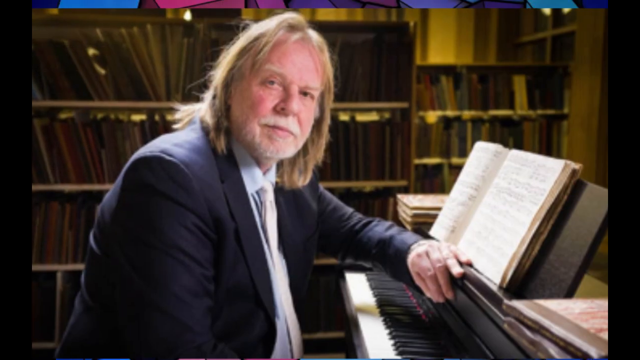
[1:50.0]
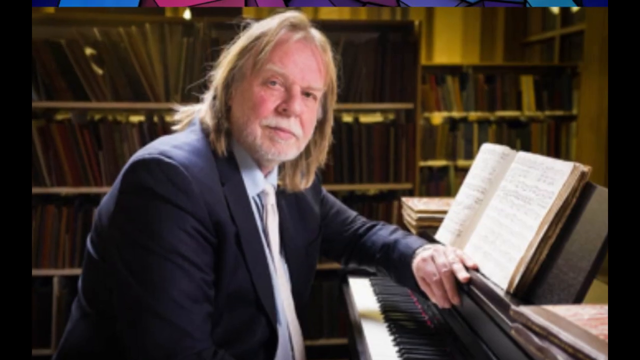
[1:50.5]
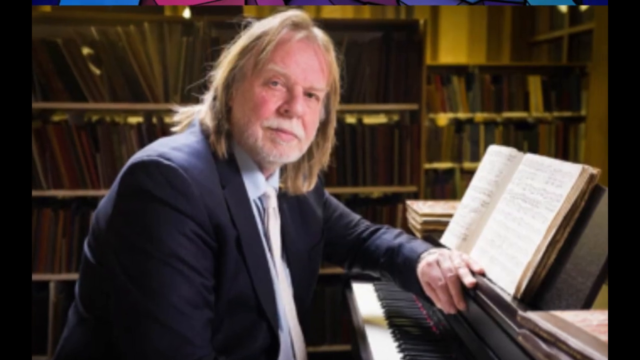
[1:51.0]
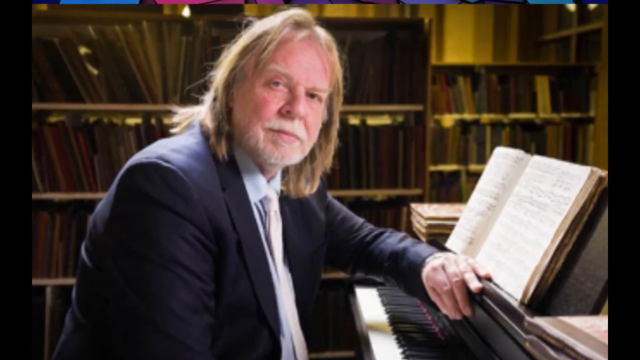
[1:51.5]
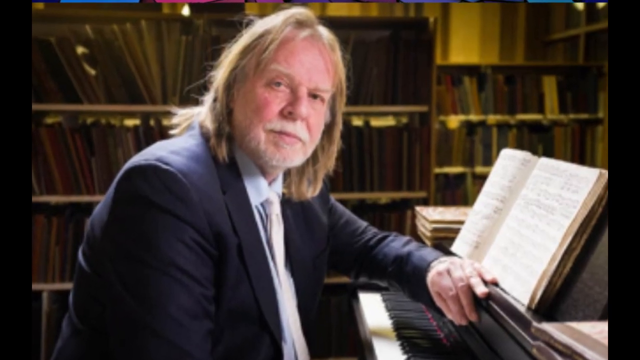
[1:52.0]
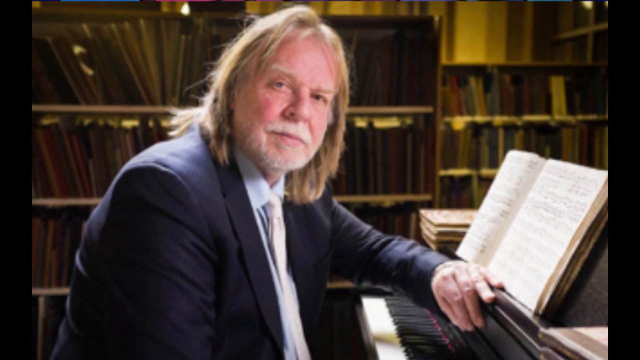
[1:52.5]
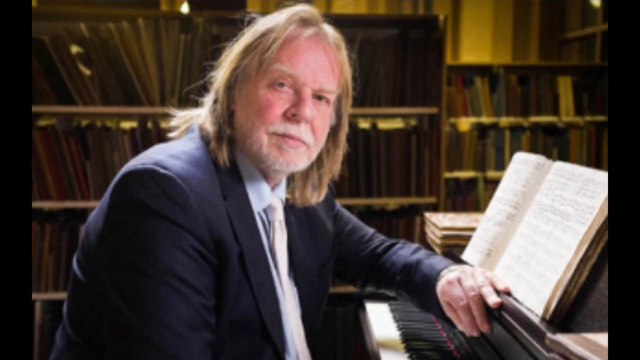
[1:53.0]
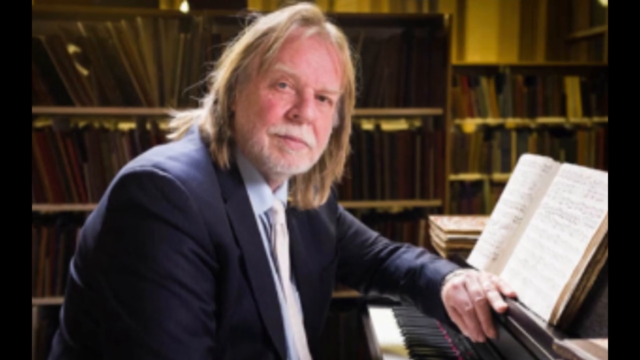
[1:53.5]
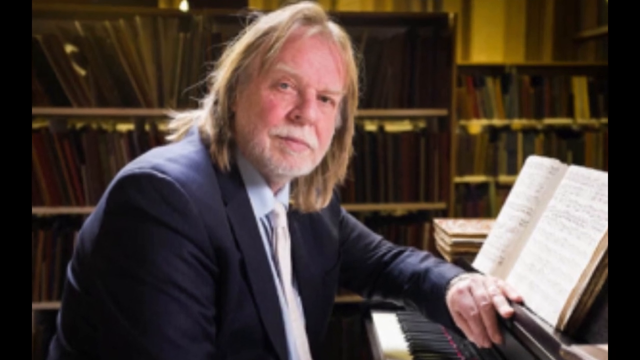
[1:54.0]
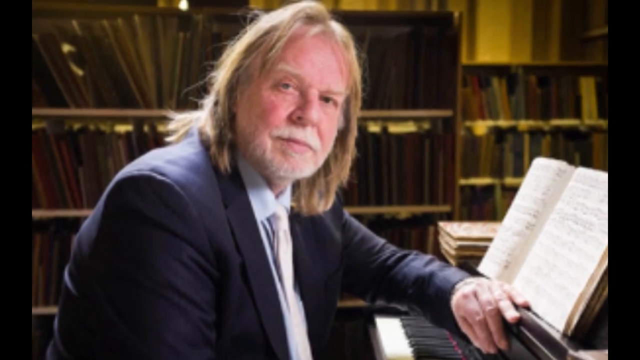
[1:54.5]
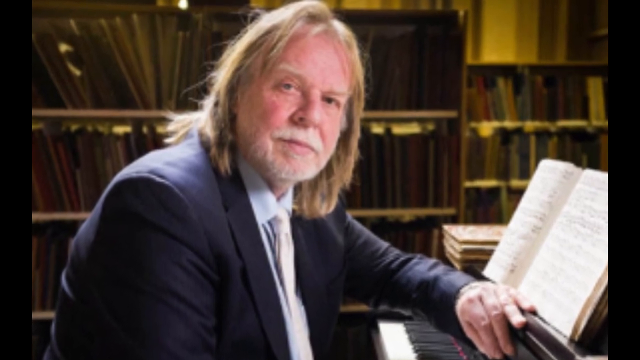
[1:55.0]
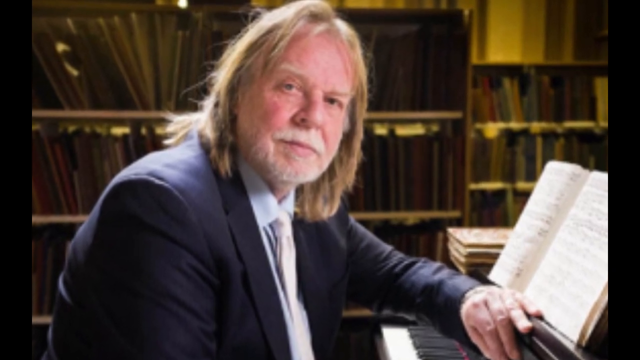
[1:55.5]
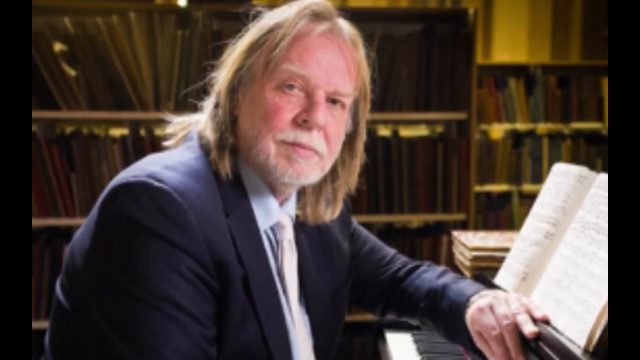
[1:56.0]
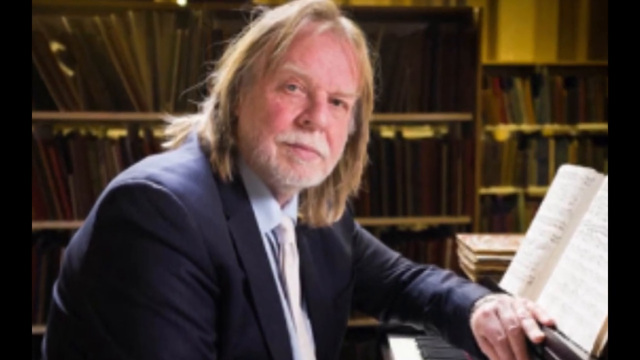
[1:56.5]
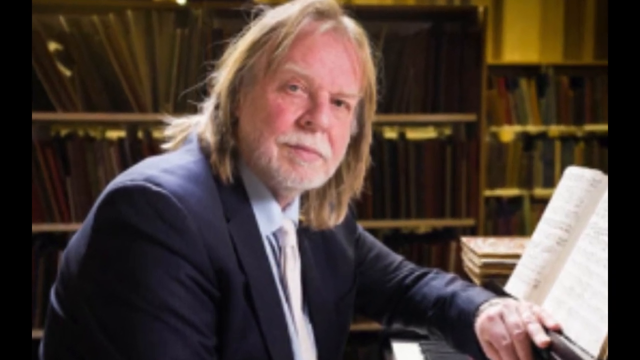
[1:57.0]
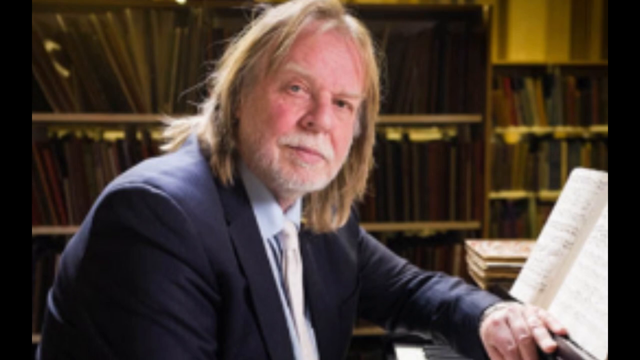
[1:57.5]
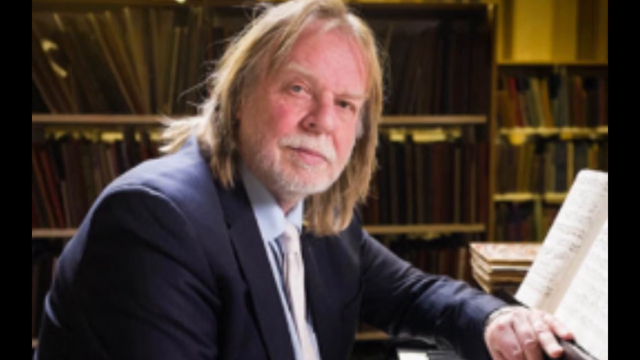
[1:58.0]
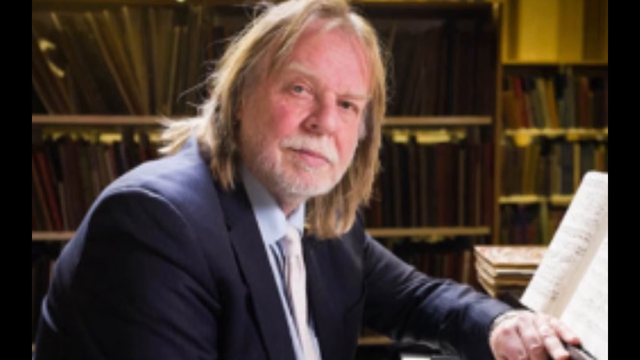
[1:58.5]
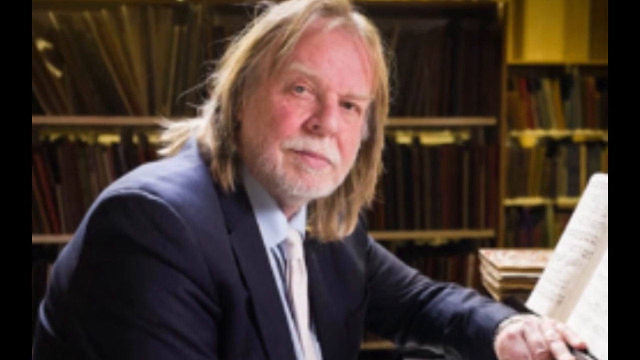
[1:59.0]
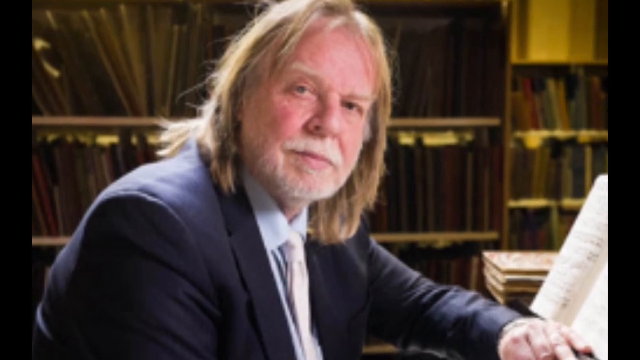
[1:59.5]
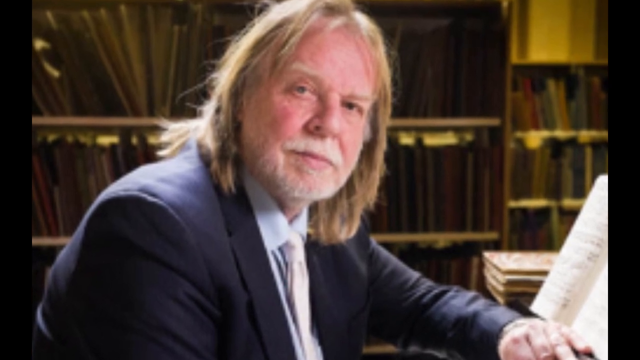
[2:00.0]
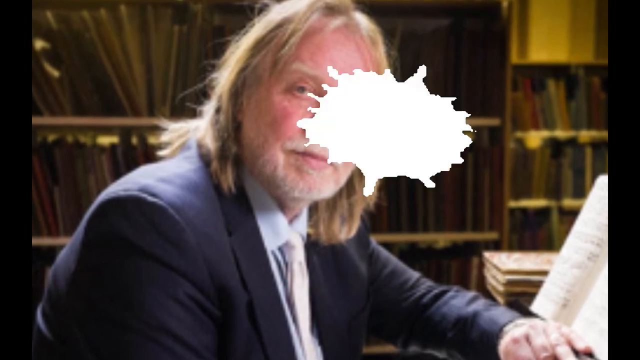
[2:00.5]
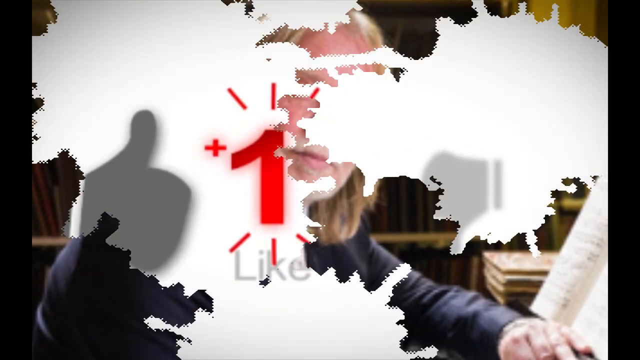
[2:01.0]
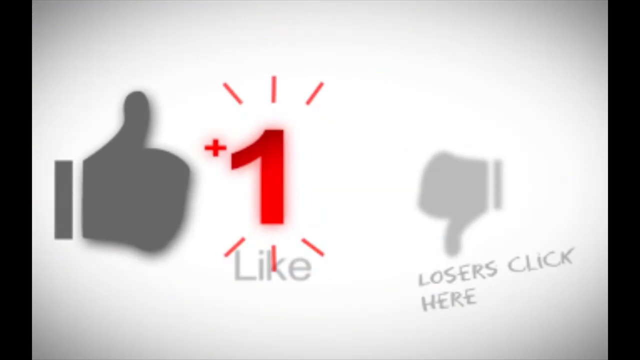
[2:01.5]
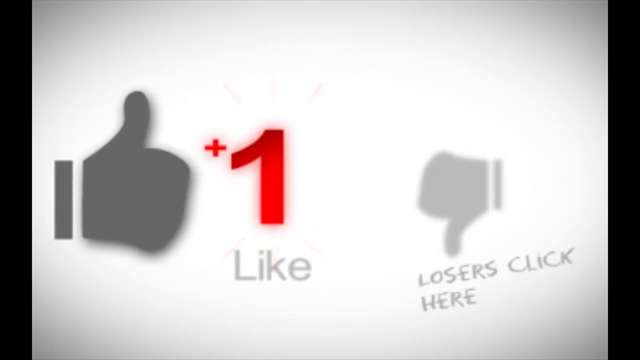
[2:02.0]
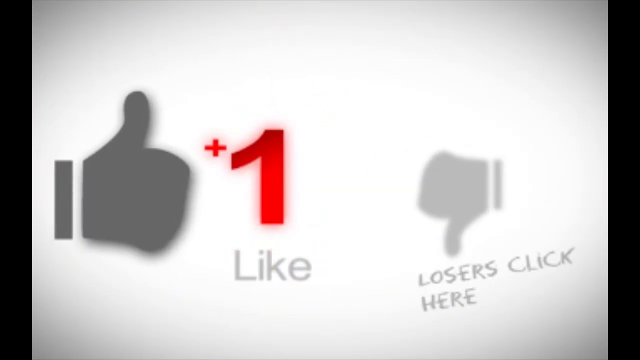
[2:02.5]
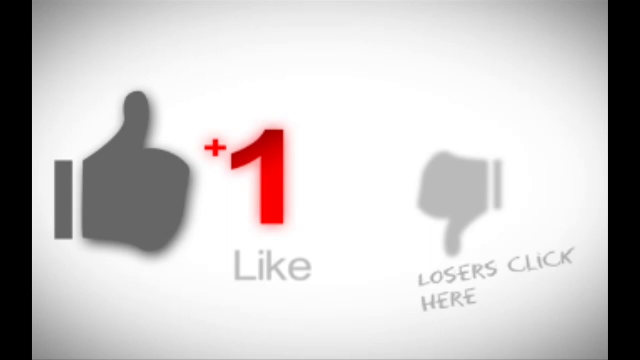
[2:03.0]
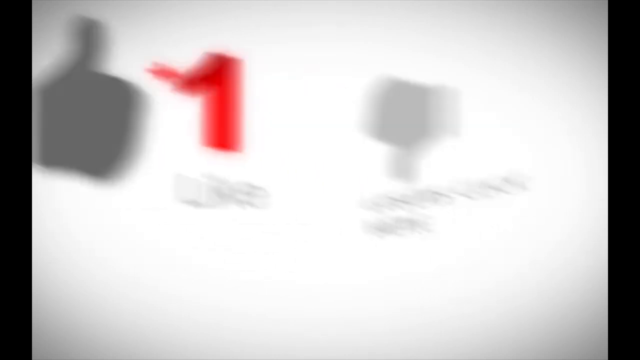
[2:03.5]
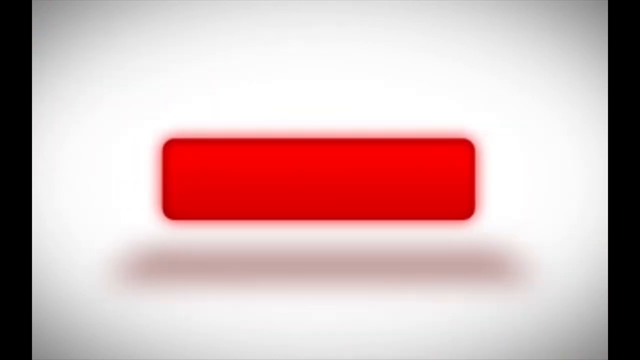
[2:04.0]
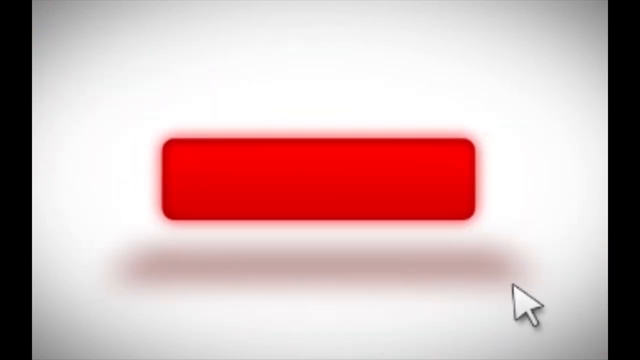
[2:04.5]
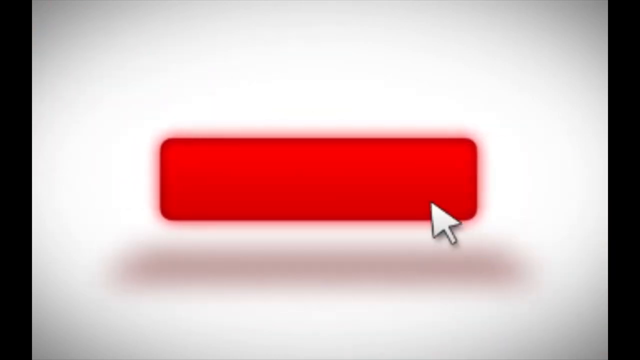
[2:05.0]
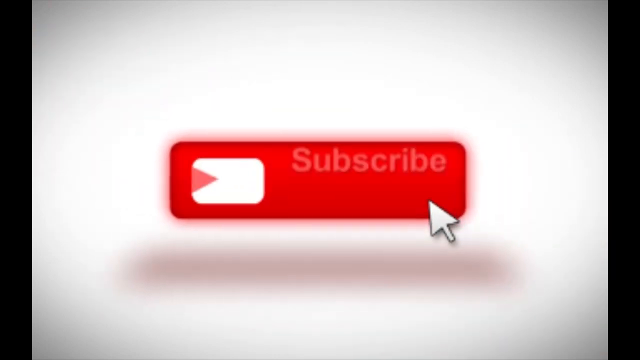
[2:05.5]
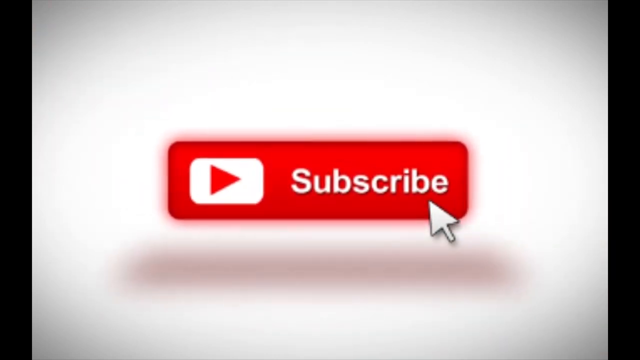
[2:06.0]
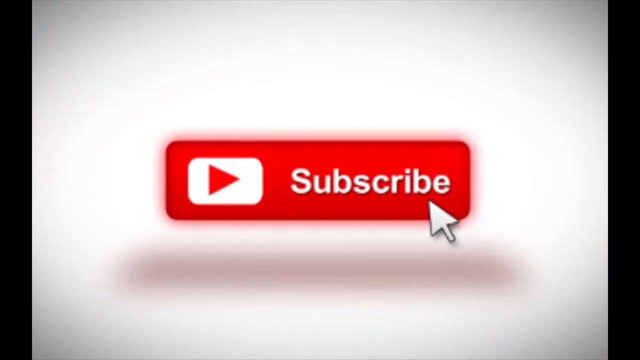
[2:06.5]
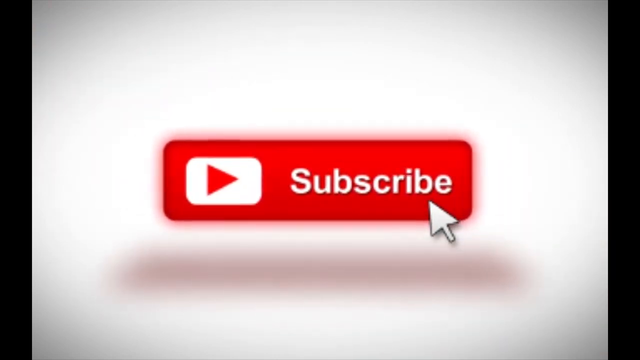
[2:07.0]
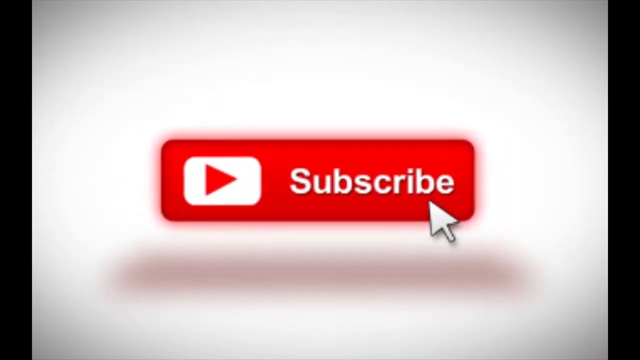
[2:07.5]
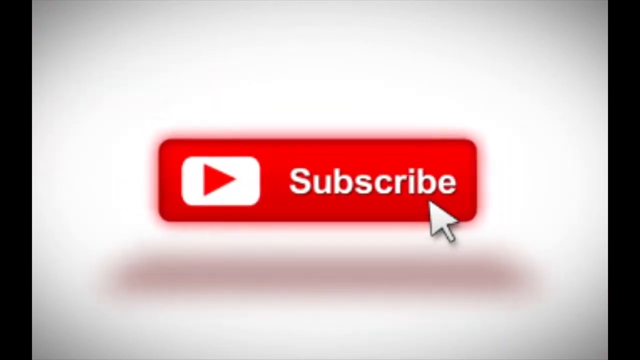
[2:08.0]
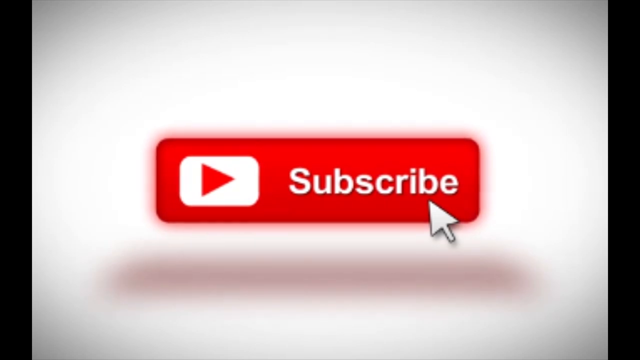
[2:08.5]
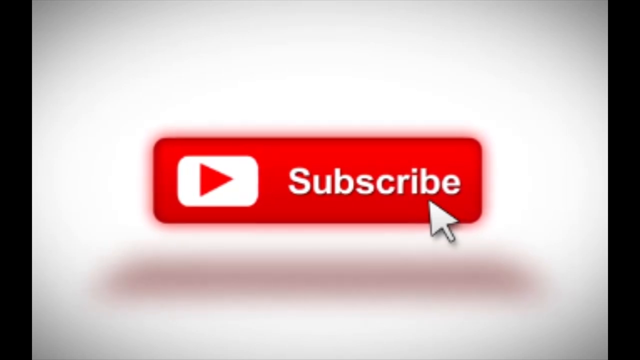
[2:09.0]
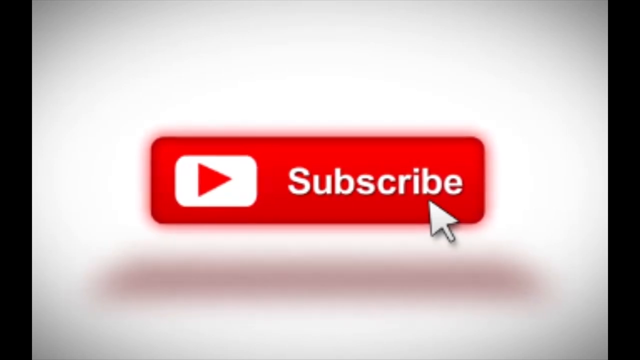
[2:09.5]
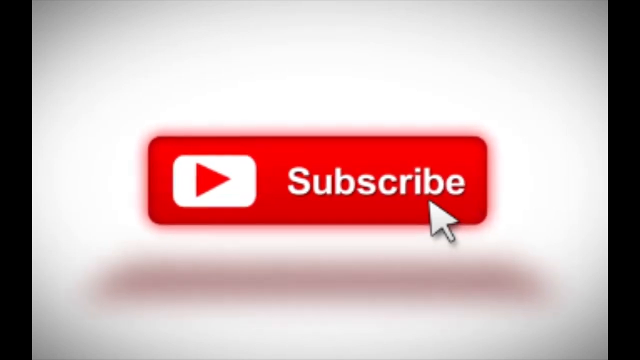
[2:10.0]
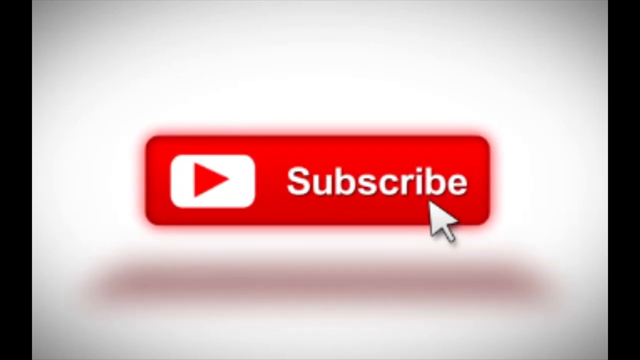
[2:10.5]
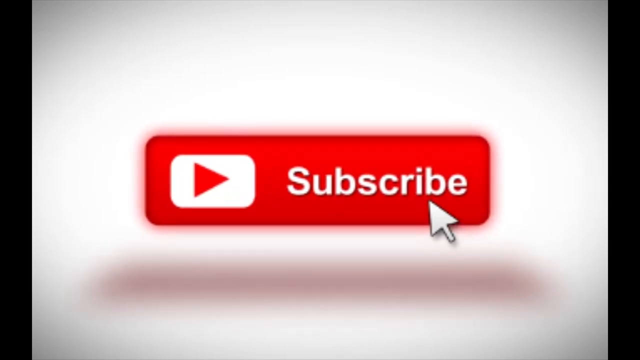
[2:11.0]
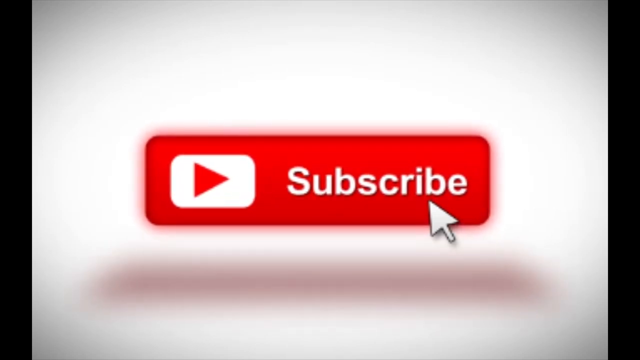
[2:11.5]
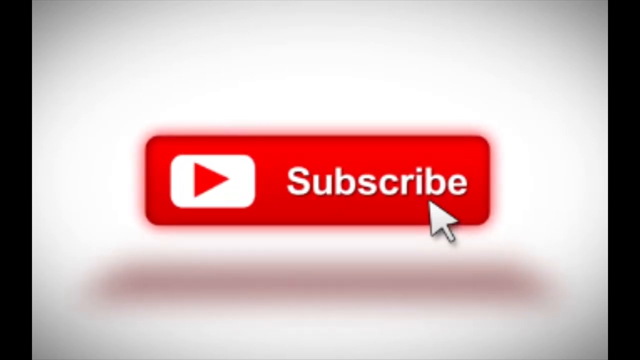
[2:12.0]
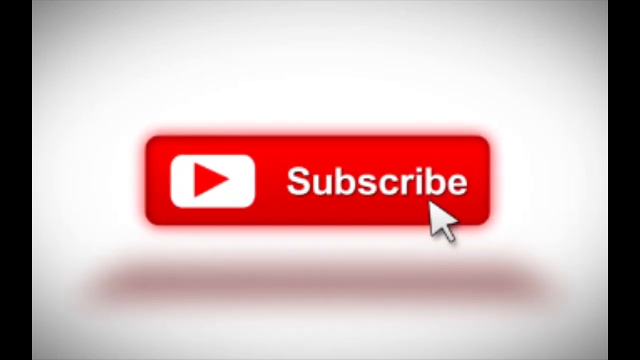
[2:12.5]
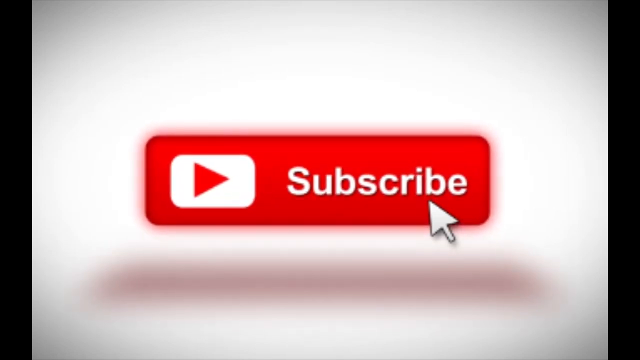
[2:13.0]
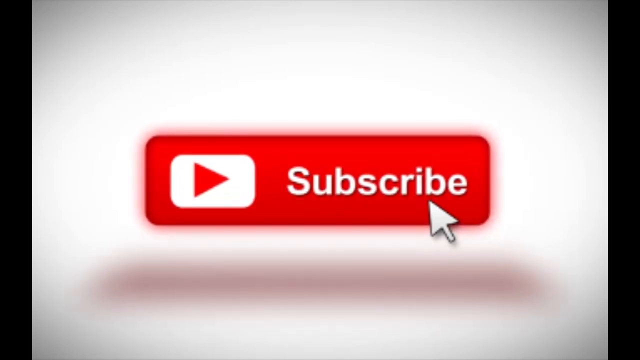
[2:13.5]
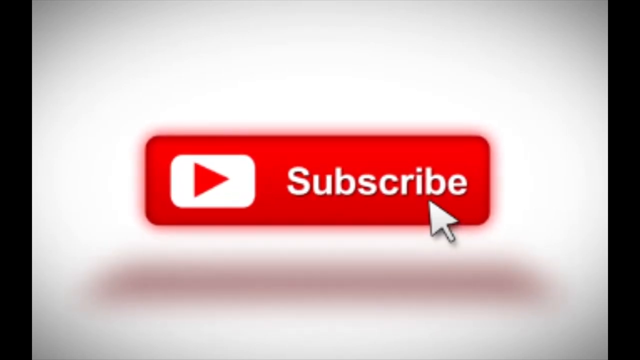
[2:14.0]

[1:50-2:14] A still image shows Chris Squire sitting in front of a piano, looking over to his right at the camera as his picture is taken. Sheet music is opened up on top of the top board of the piano in front of him. He wears a dark-colored suit, a white shirt and a white tie. He appears to be in a studio area, with hundreds, maybe even thousands, of albums on shelves behind him. The video then transitions to its final image, a large red subscribe button, apparently a YouTube subscribe button.